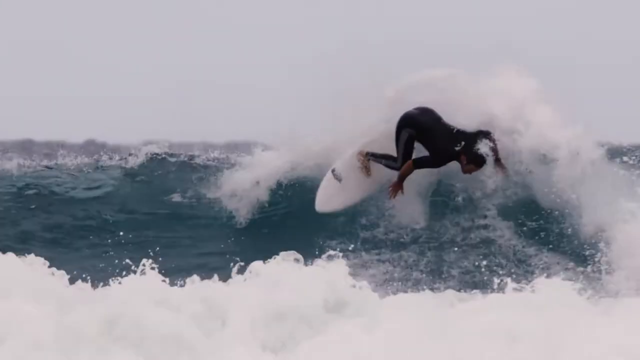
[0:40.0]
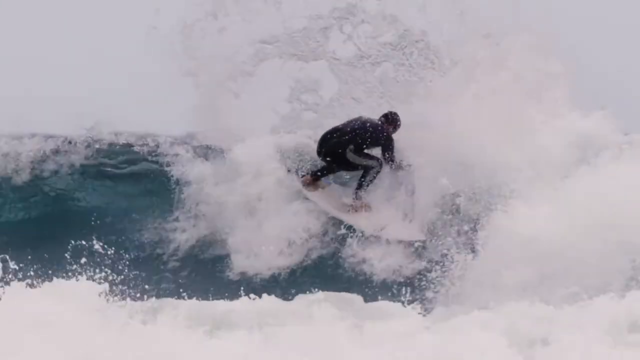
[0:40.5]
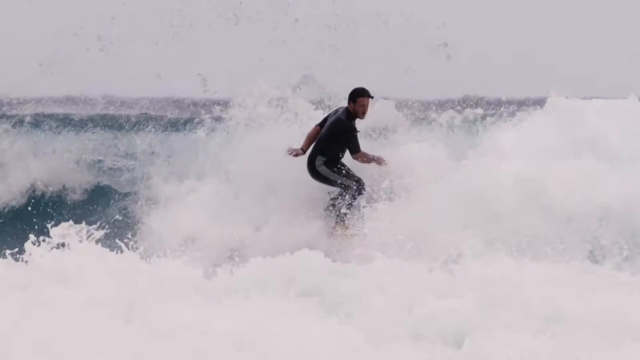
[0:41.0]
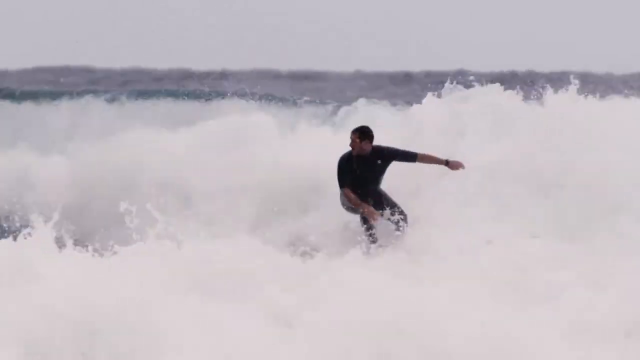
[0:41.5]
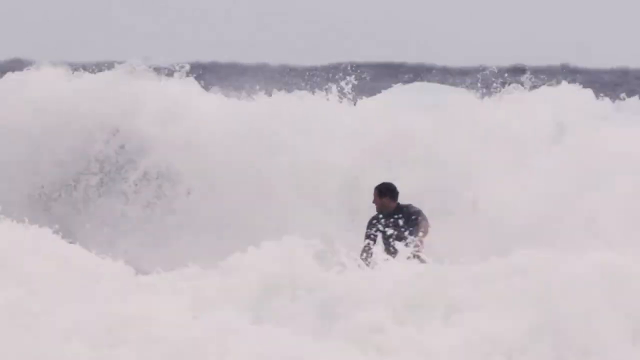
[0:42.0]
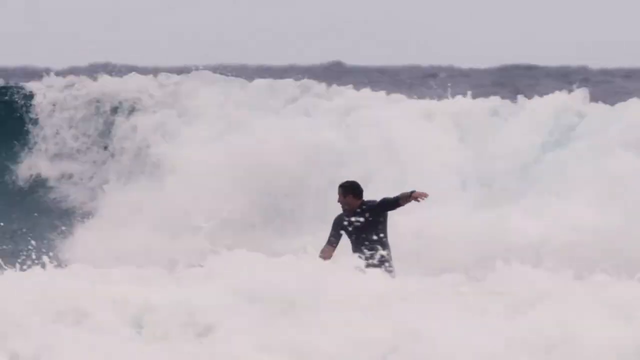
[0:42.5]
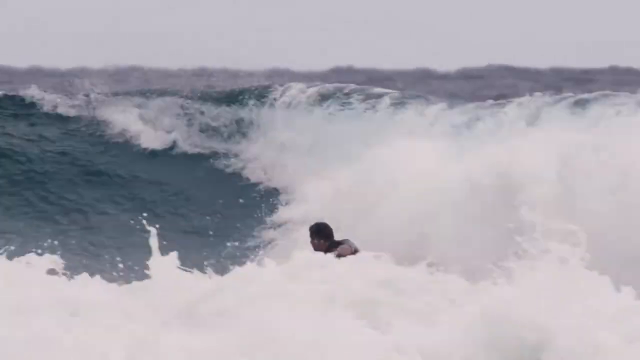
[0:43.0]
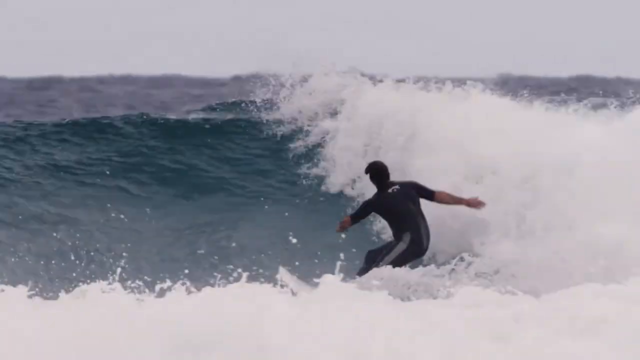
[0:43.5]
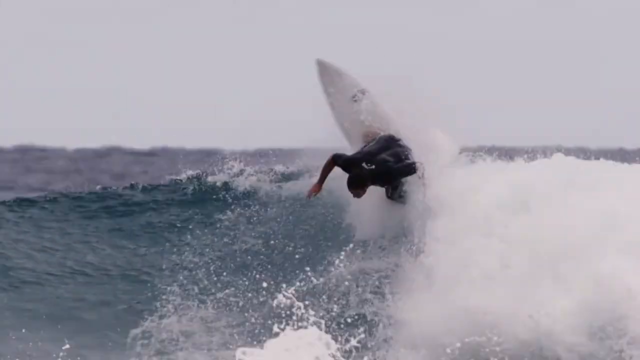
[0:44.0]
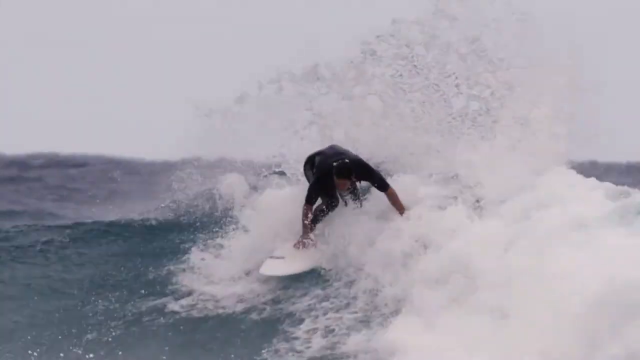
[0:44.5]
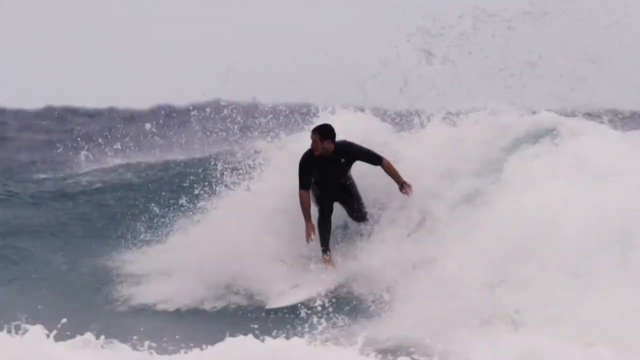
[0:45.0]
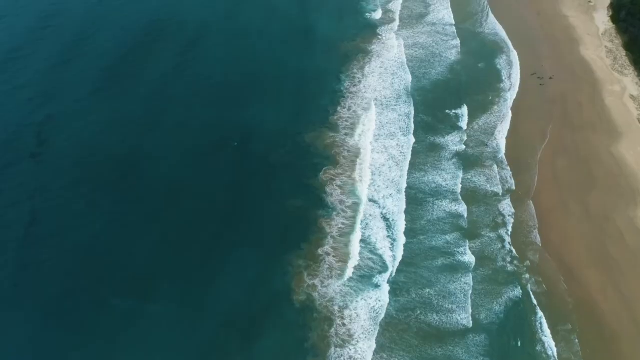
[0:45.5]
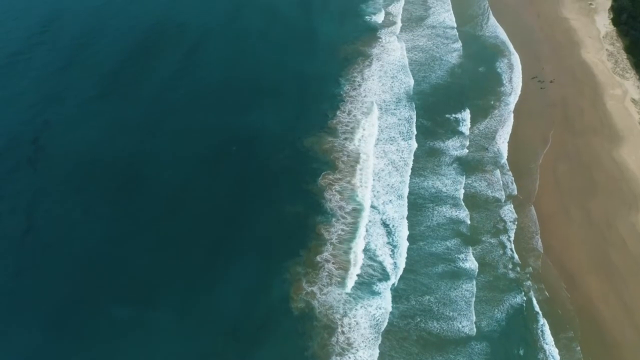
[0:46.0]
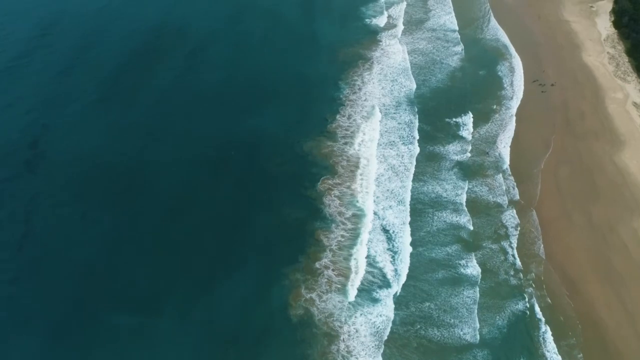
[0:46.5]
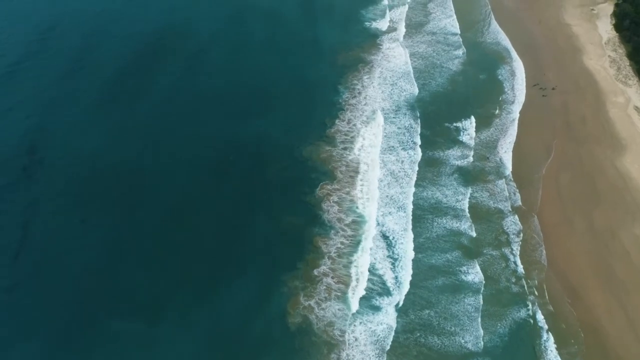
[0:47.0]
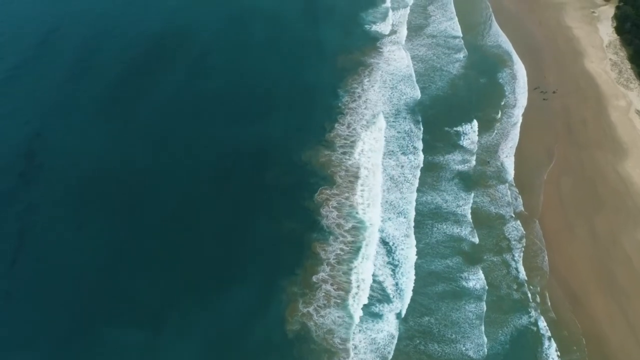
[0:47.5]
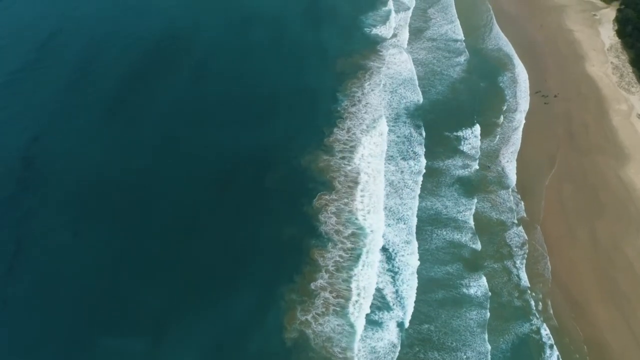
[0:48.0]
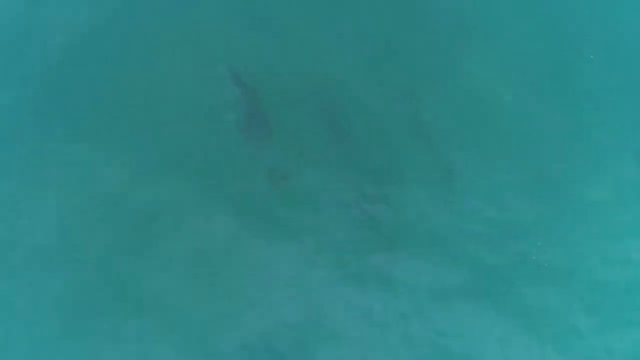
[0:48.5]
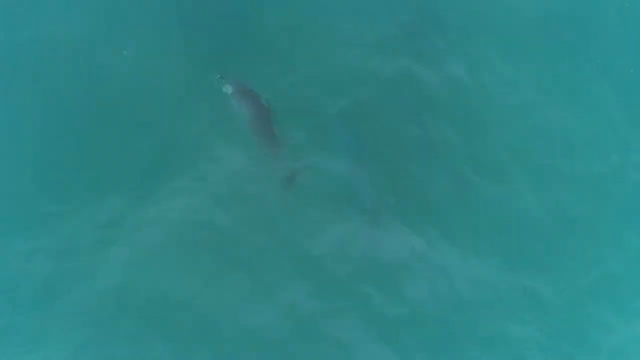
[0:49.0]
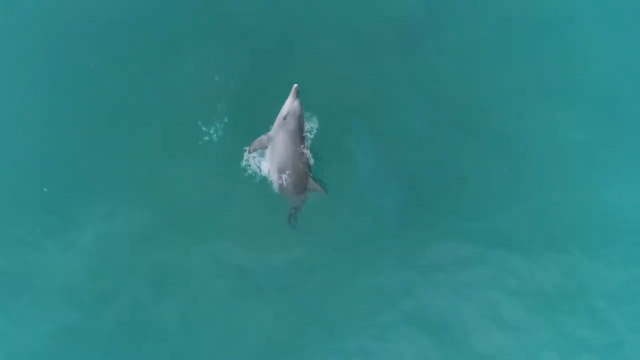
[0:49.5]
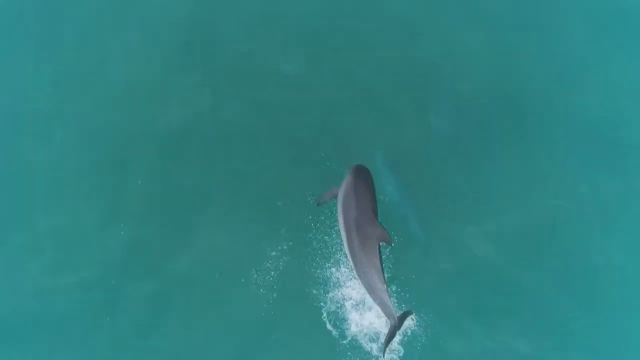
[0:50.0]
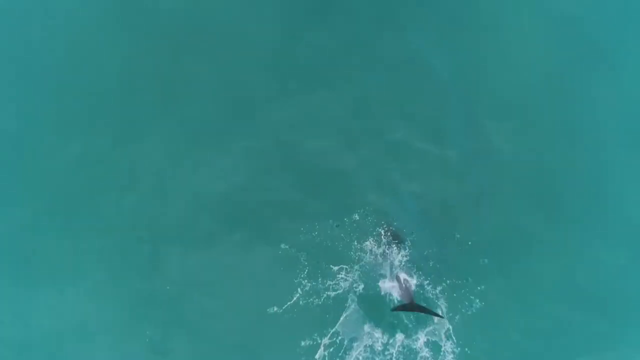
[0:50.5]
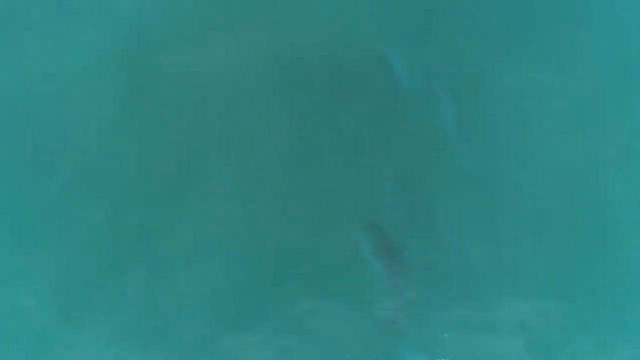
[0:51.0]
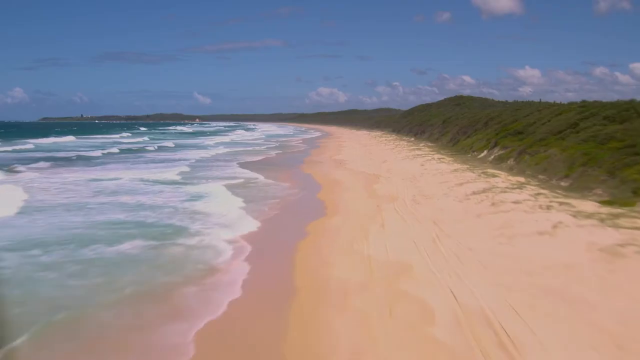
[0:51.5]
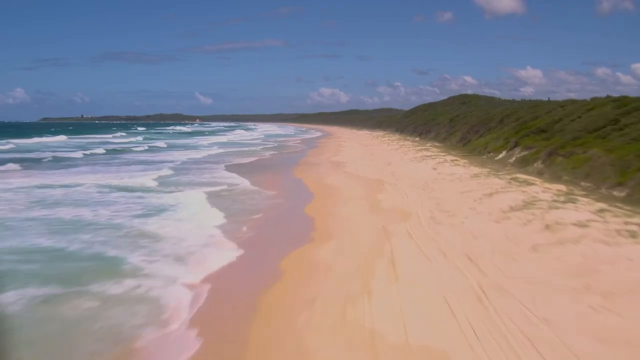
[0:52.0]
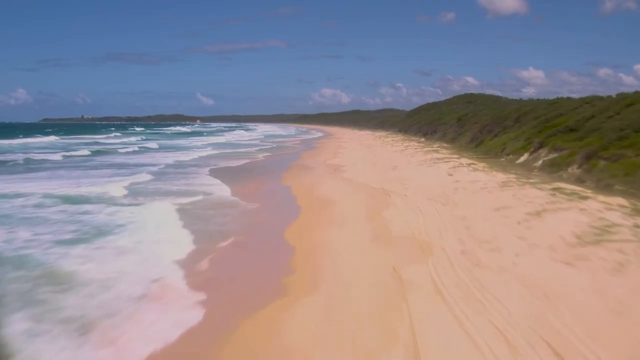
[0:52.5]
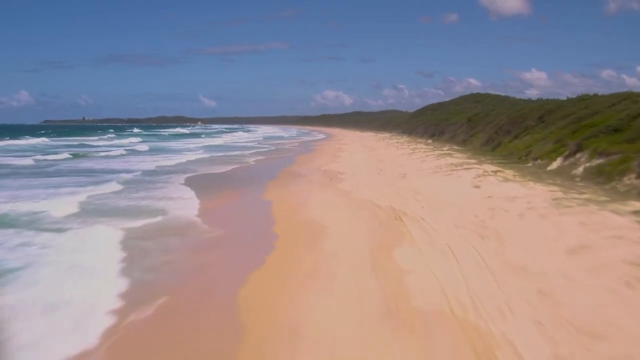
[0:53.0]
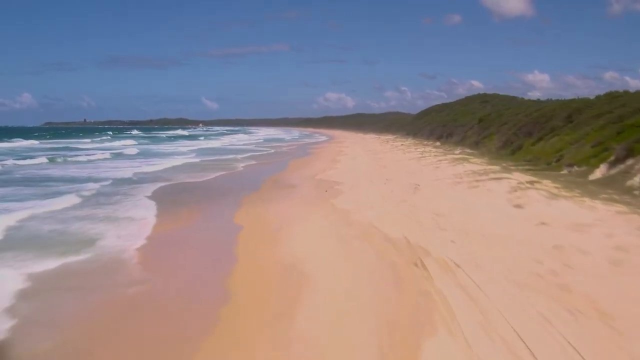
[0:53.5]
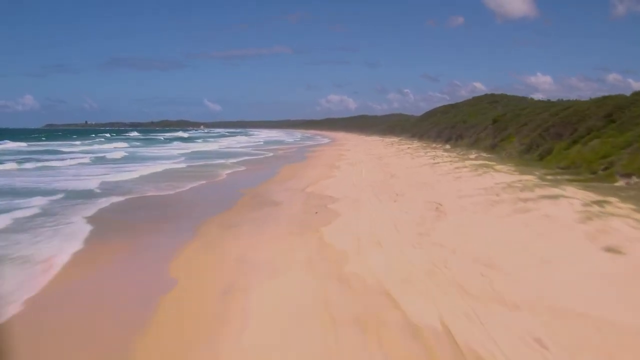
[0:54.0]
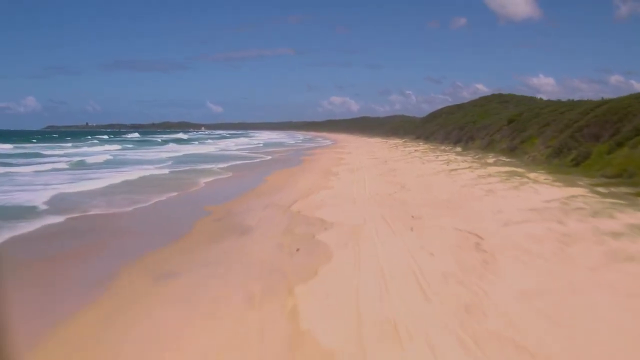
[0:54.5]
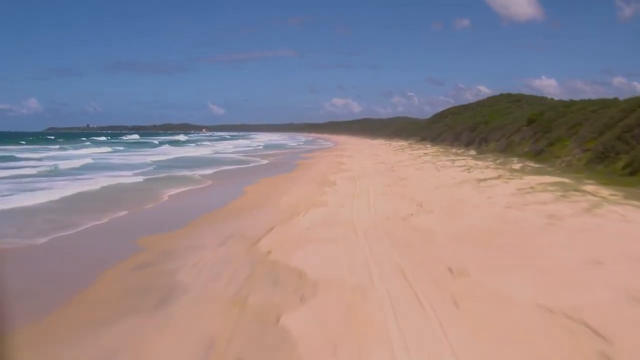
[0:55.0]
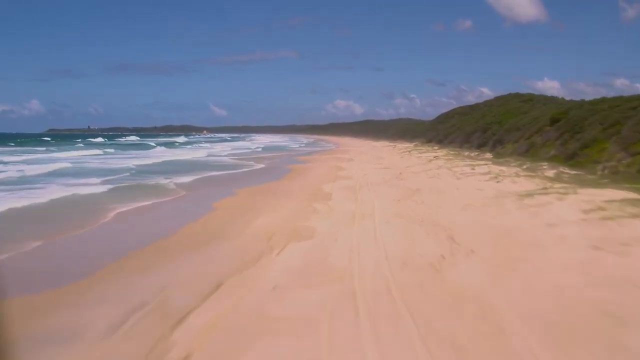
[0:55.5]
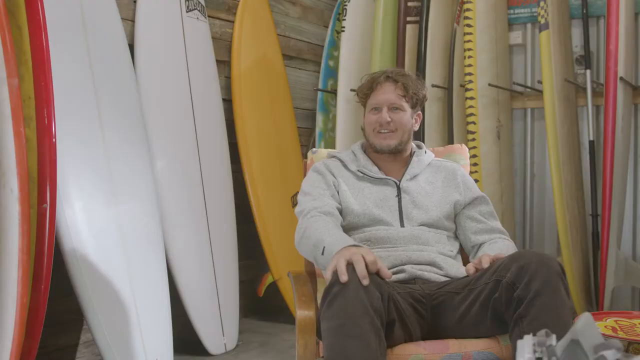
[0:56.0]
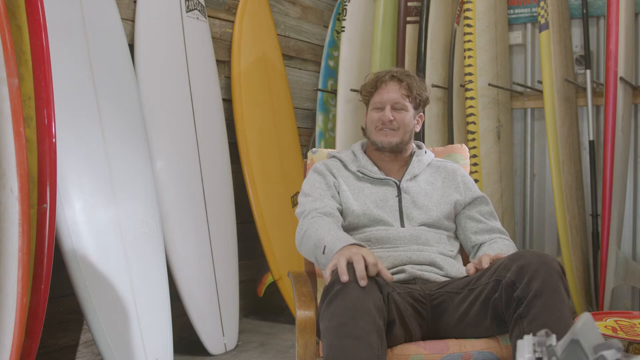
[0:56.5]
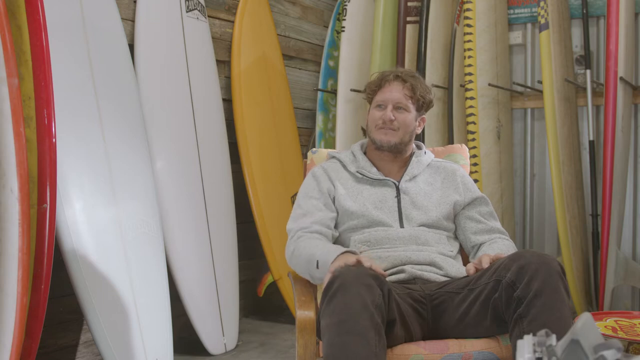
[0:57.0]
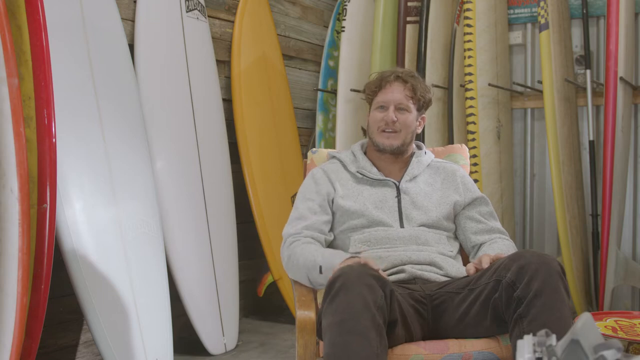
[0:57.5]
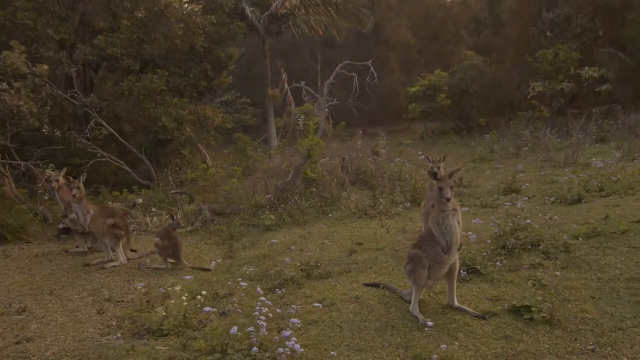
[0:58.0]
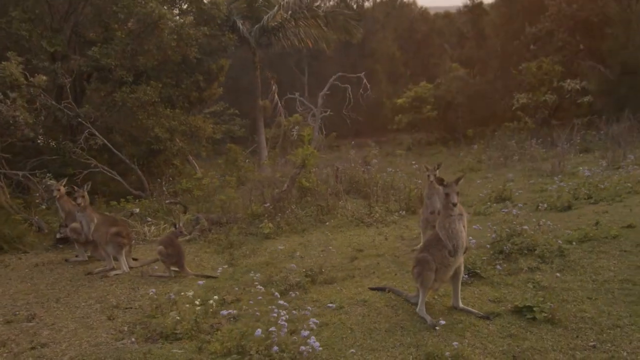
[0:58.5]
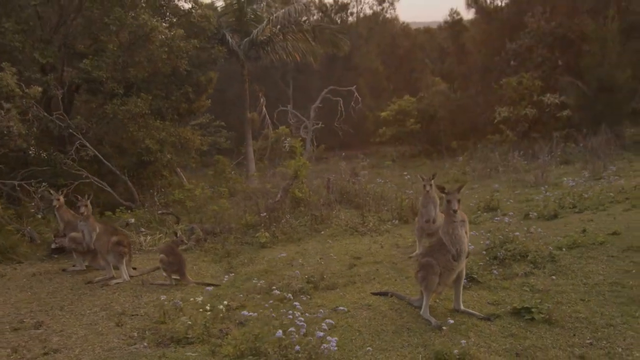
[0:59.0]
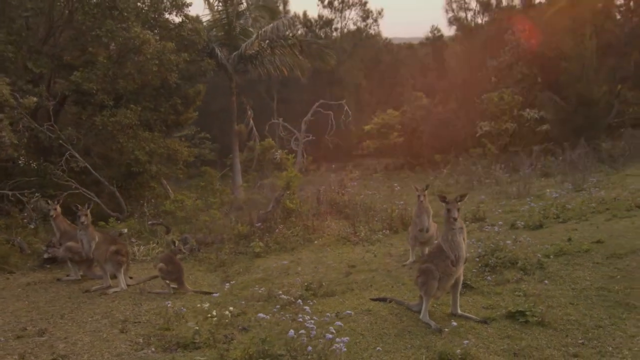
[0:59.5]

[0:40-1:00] The man surfs, kind of whipping his hip so the surfboard goes up in the air, then twisting his hips back down. An aerial view of the ocean shows where the water is deeper and, closer to the beach, waves breaking with foam; there might be a group of about six or seven people on the beach. An aerial shot shows a dolphin jumping out of the ocean and diving back in. Another aerial view has the camera going over the beach very quickly; the beach is not huge, probably a few hundred feet from the hilly area to where the water comes up on the sand. The video returns to the man sitting in the chair, then shows woods with what look like kangaroos of varying ages, probably about five of them, kind of standing near each other.